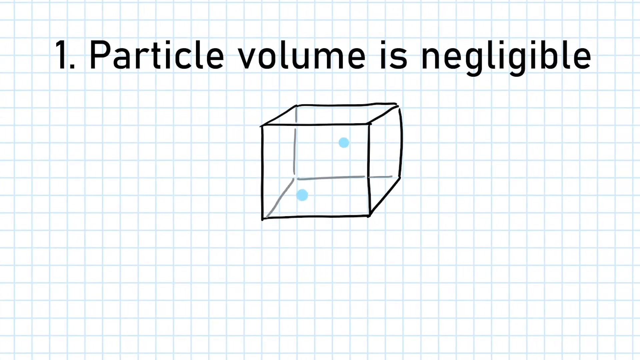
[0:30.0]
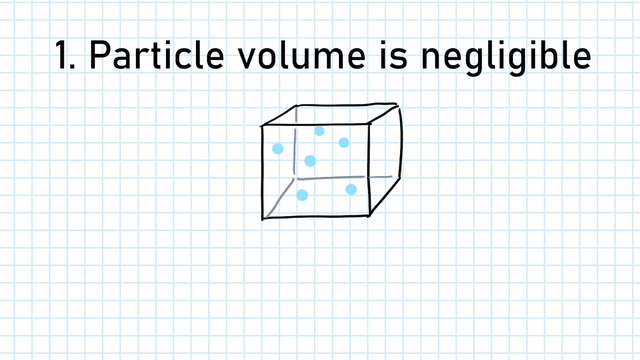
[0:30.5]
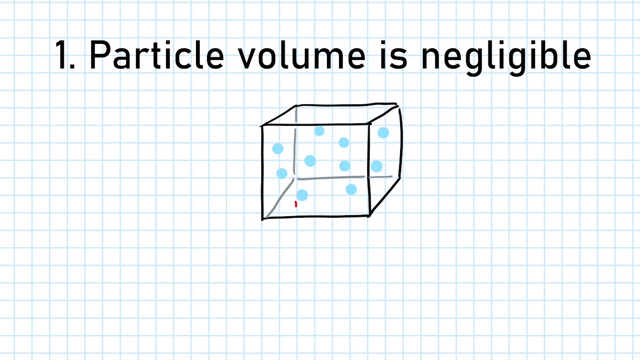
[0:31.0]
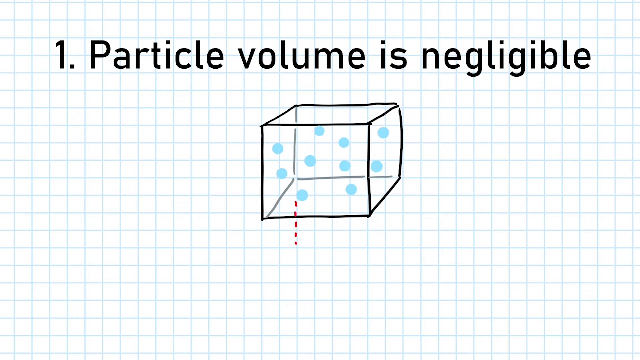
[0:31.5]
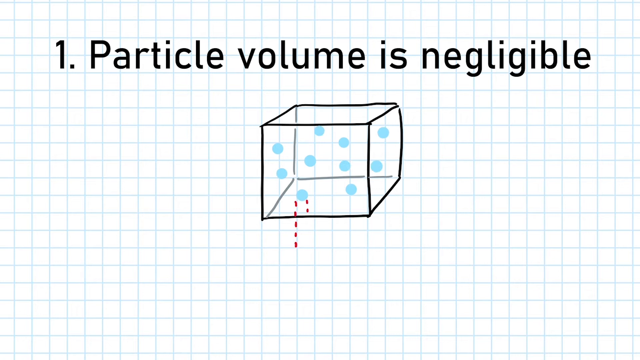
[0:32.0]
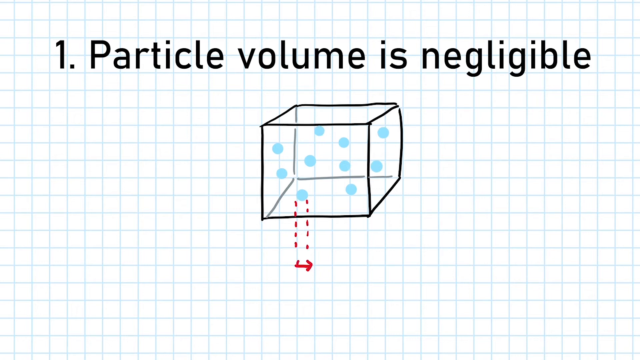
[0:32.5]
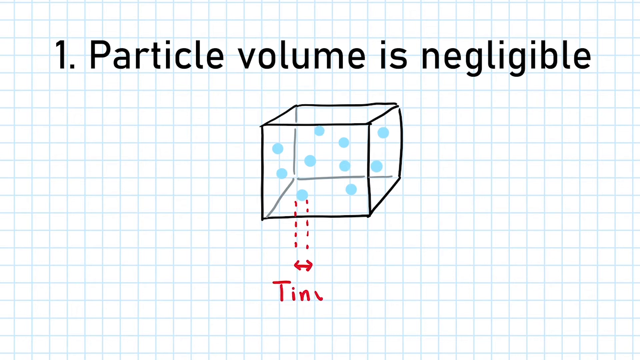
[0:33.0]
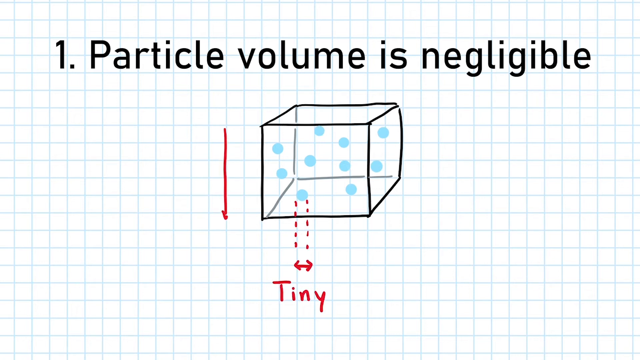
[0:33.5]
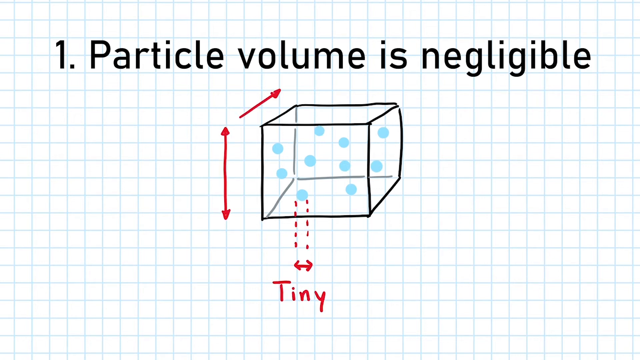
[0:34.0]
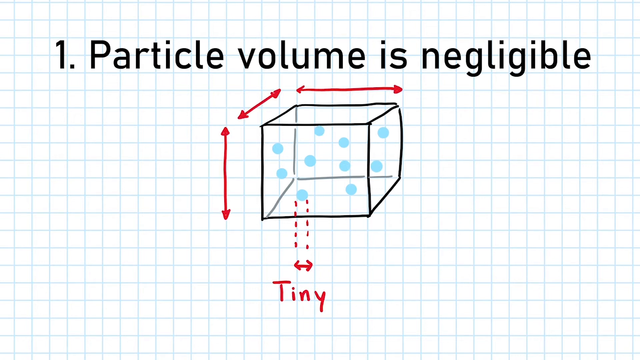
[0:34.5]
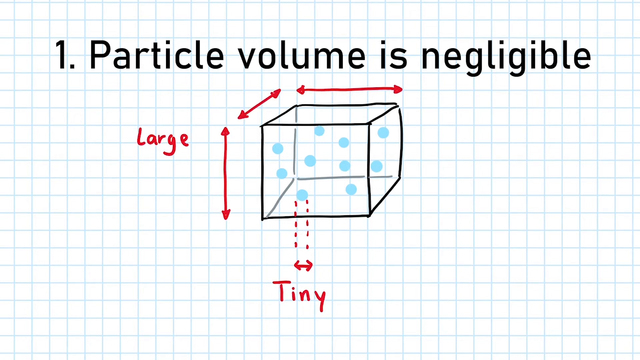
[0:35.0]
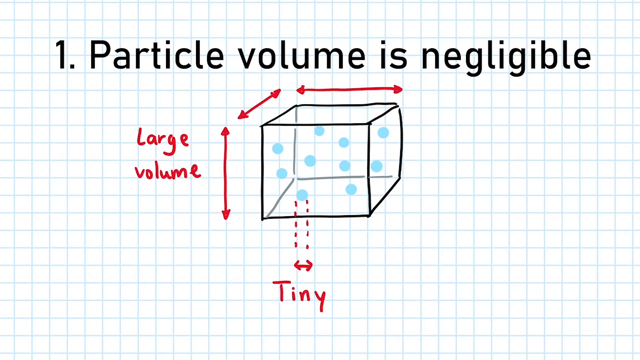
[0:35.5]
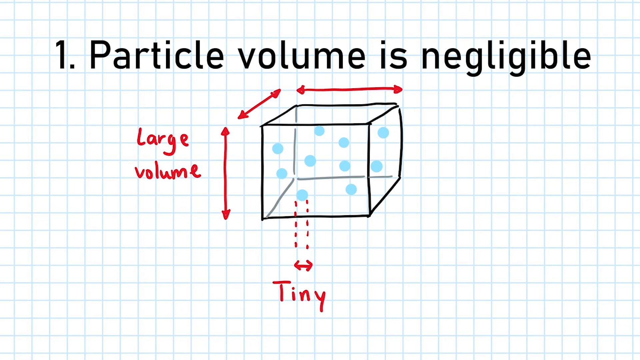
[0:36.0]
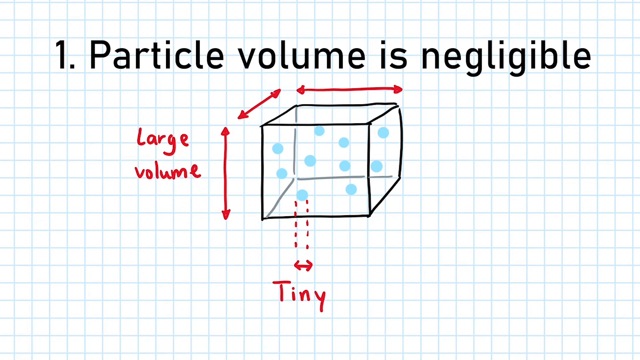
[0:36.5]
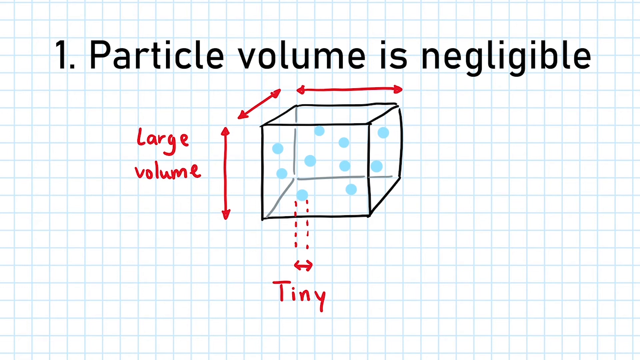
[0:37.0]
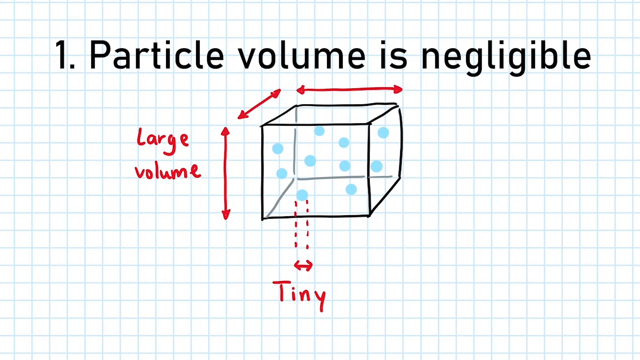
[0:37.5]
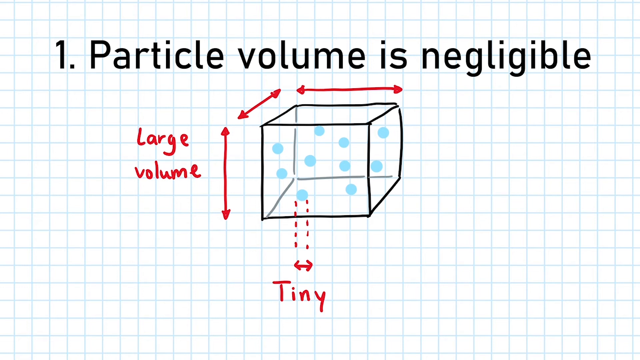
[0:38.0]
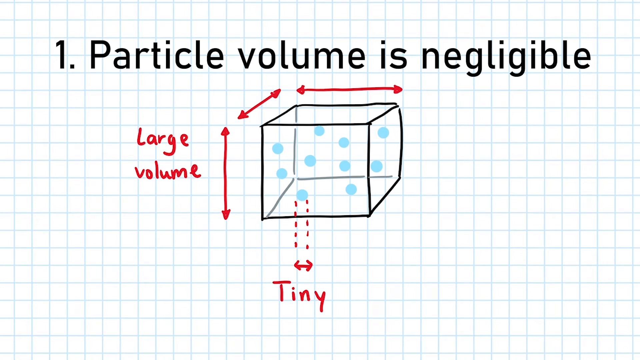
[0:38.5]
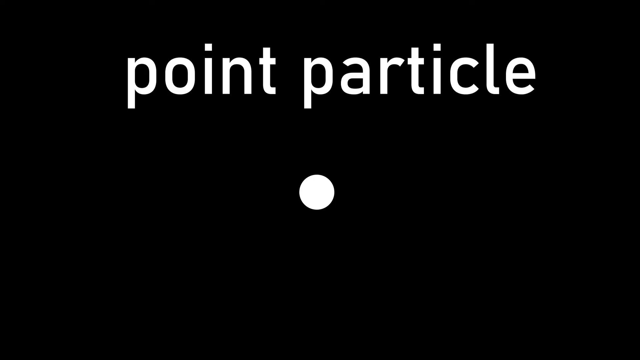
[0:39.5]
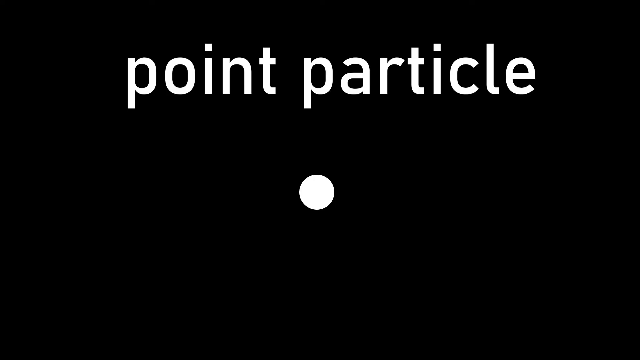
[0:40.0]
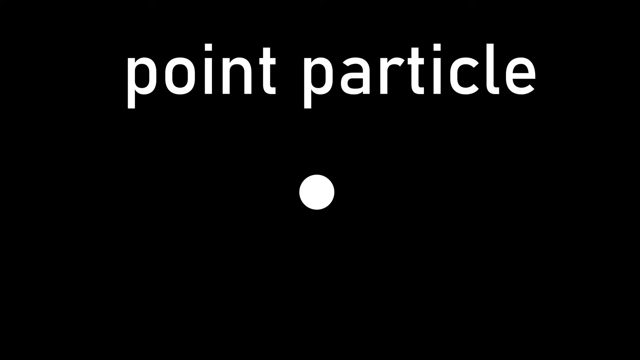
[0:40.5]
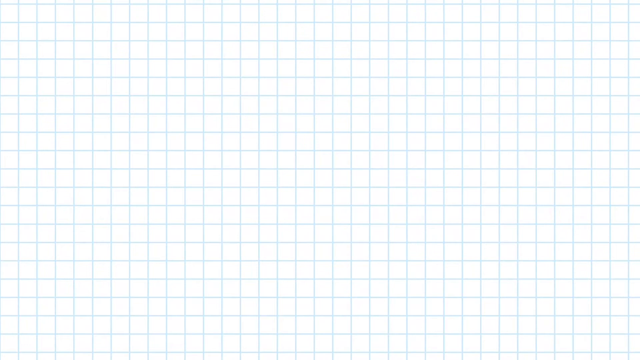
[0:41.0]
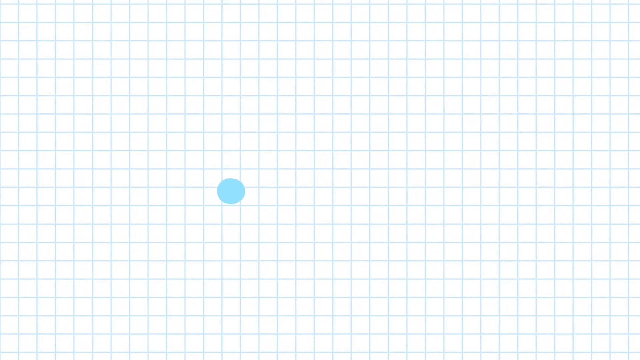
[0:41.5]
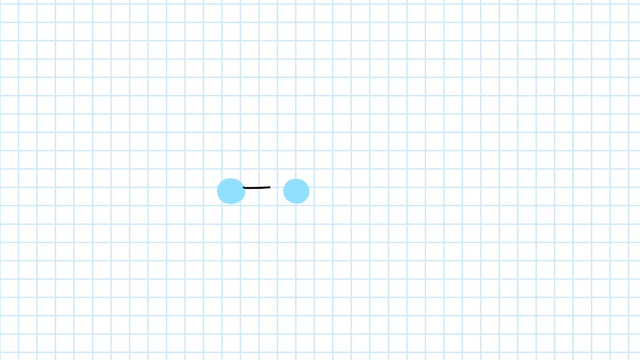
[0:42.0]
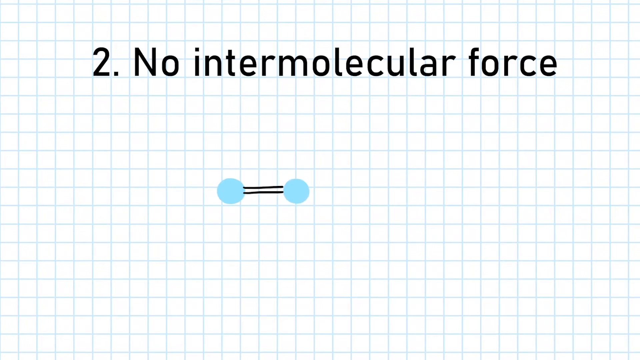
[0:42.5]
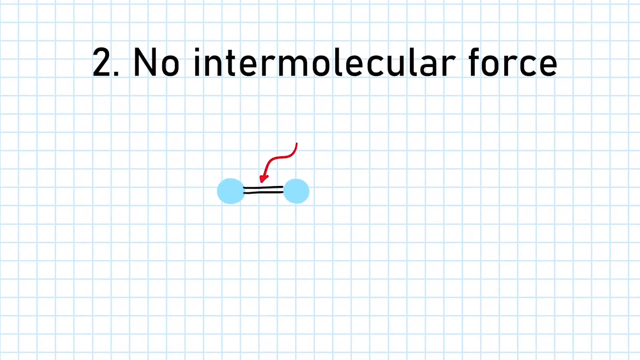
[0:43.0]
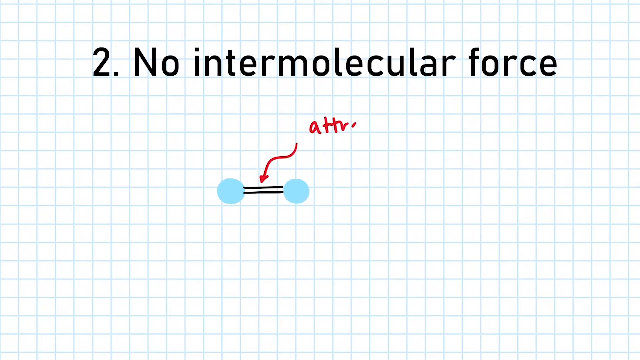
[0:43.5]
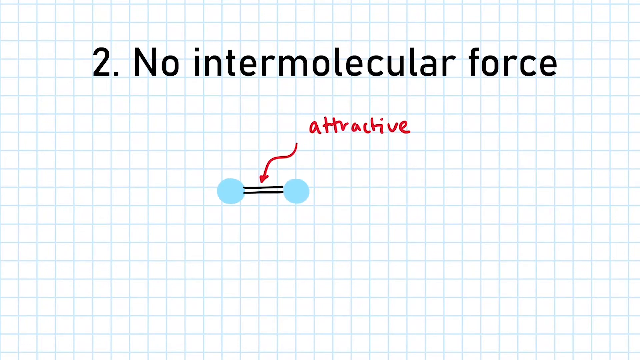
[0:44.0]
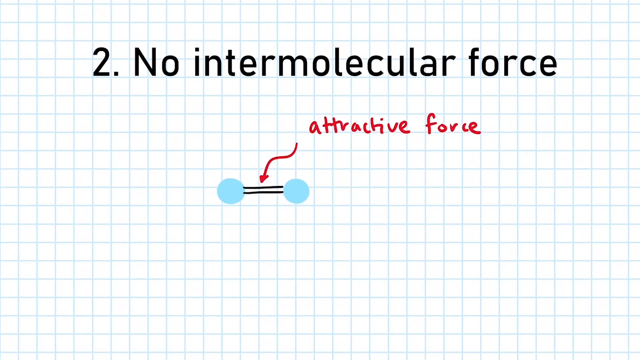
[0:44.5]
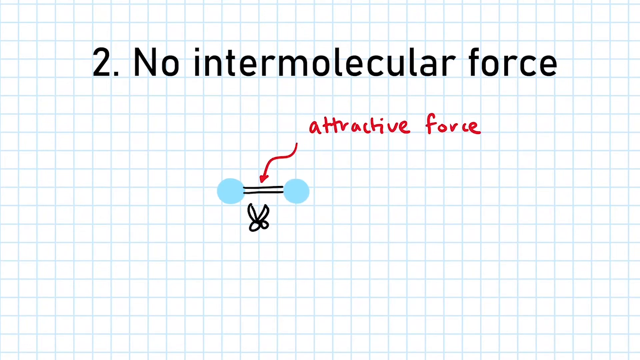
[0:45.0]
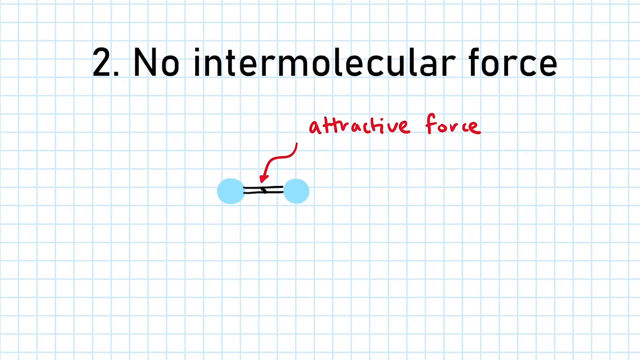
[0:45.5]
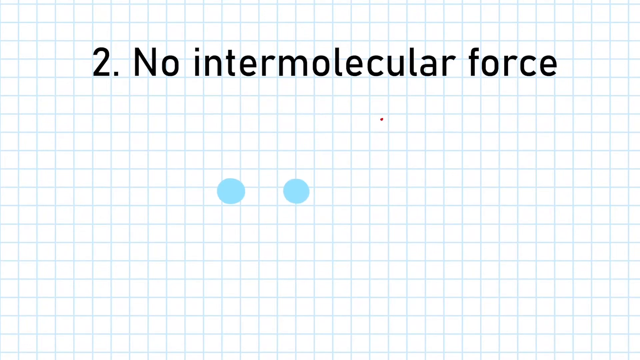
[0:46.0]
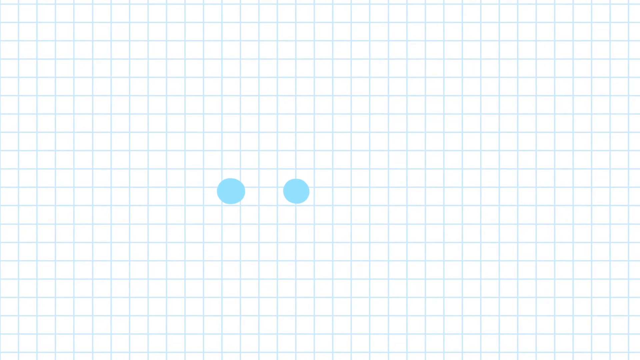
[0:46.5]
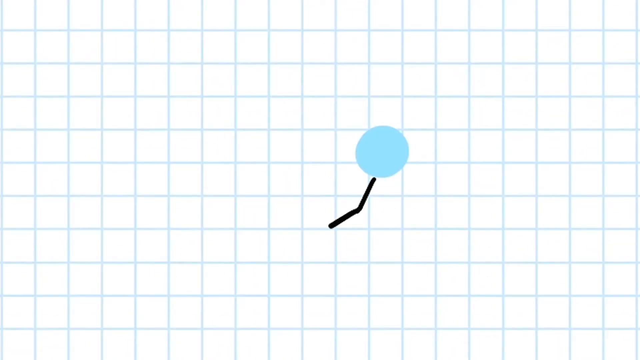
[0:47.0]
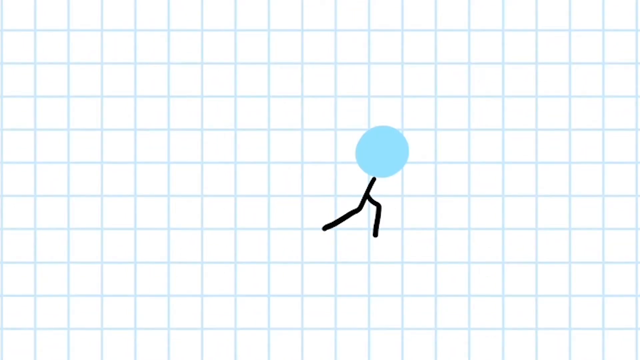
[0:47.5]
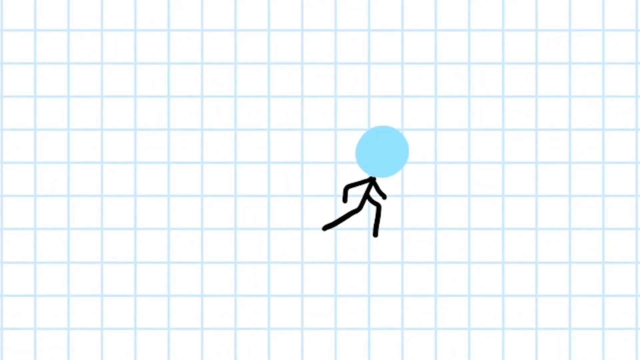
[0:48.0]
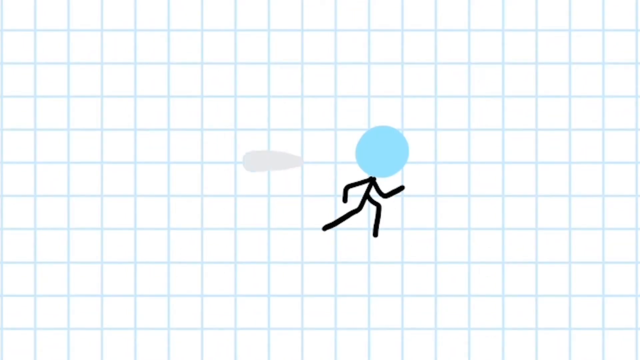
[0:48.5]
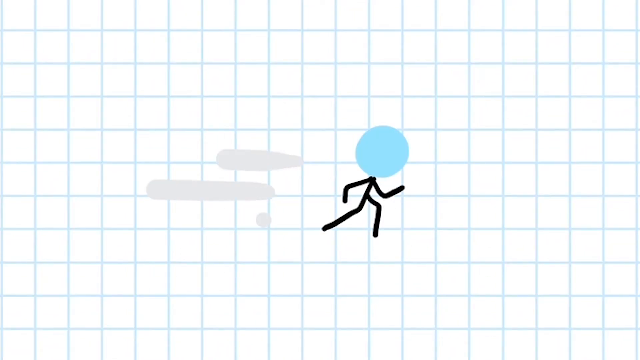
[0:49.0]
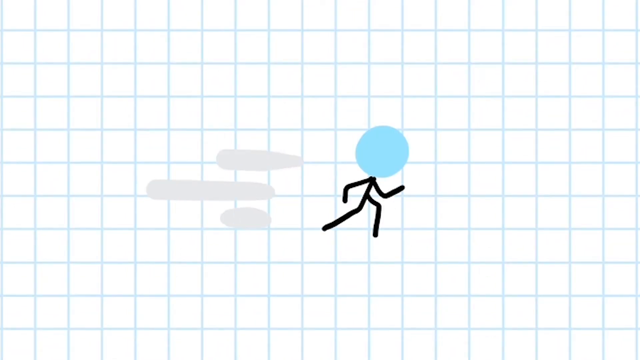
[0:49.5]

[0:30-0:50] A cube is being drawn, and it is very large in height, length and overall volume. Arrows are placed around three sides of the cube. It is a 3D cube, so both its back and its front side are visible, though it is not perfect: its right side is kind of curved. Text surrounds it, with "large volume" on the left and "tiny" at the bottom. The video then cuts to a black screen with white text that says "point particle", followed by number two, "no intermolecular force".